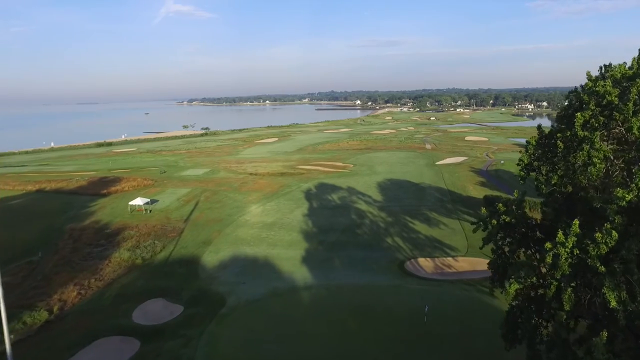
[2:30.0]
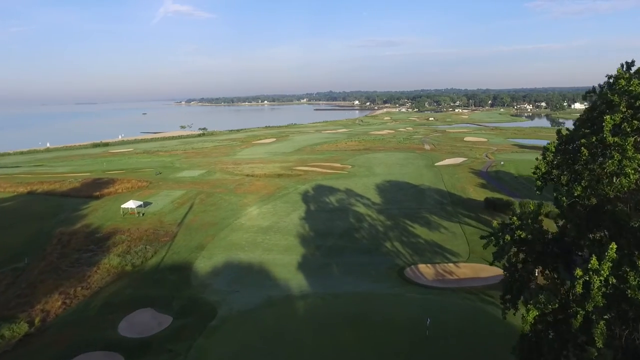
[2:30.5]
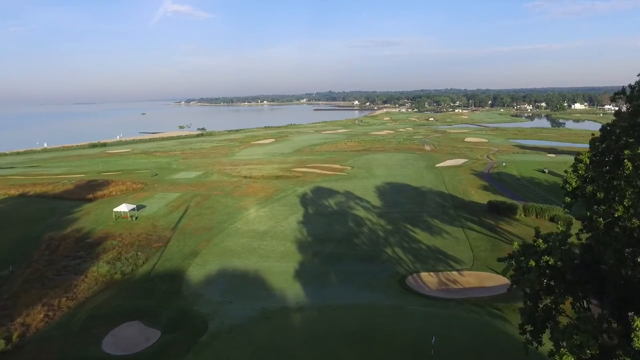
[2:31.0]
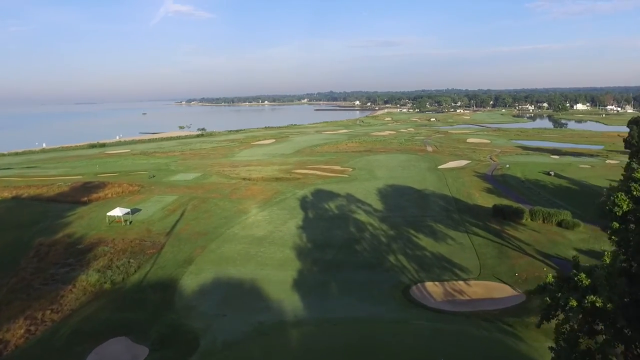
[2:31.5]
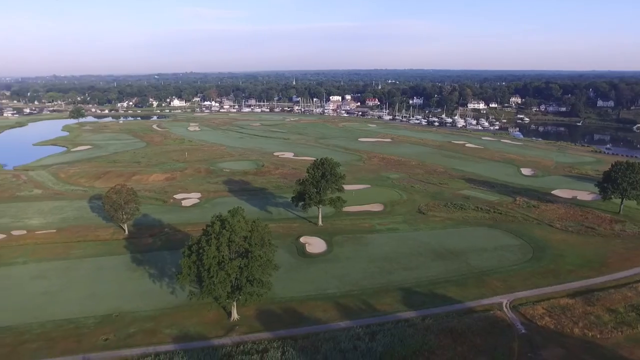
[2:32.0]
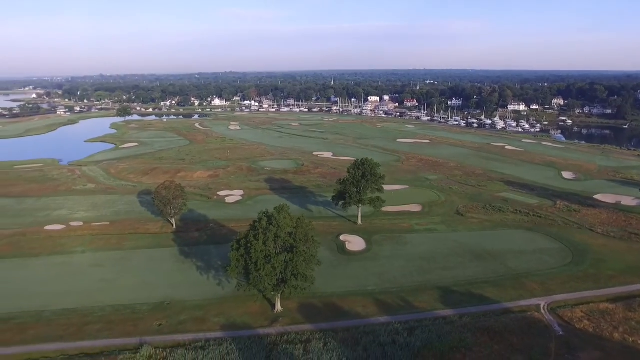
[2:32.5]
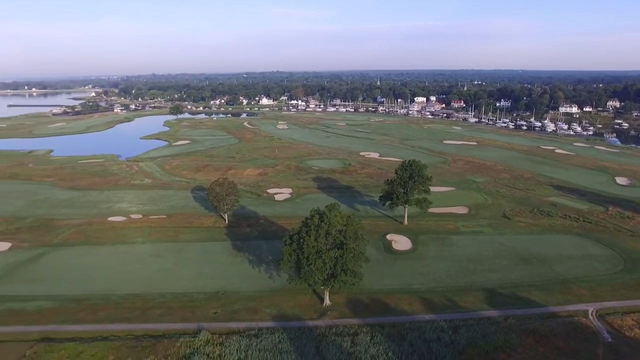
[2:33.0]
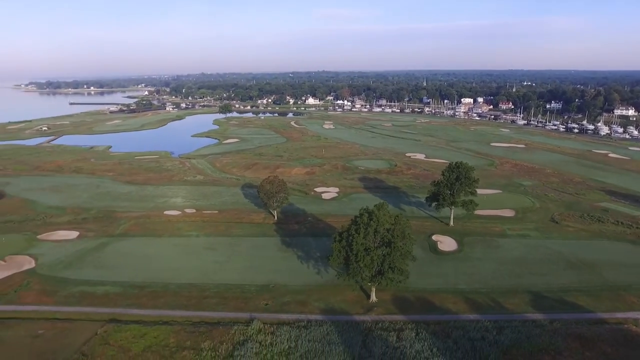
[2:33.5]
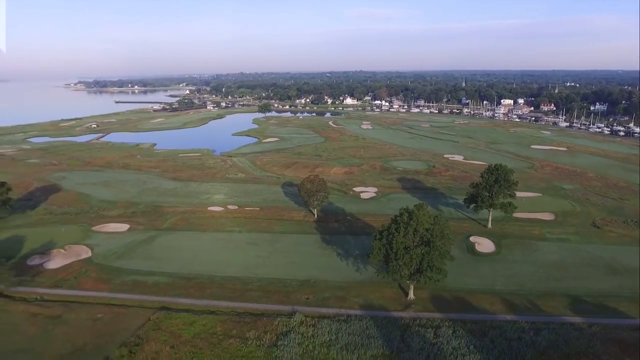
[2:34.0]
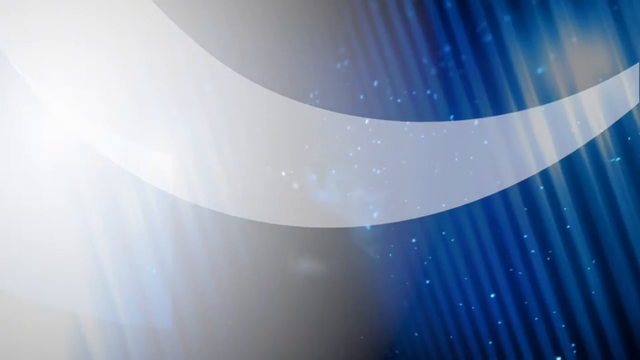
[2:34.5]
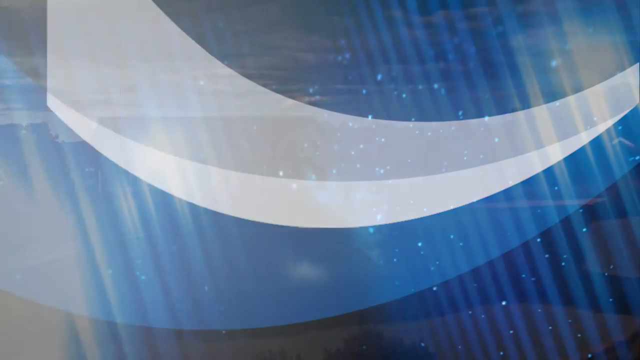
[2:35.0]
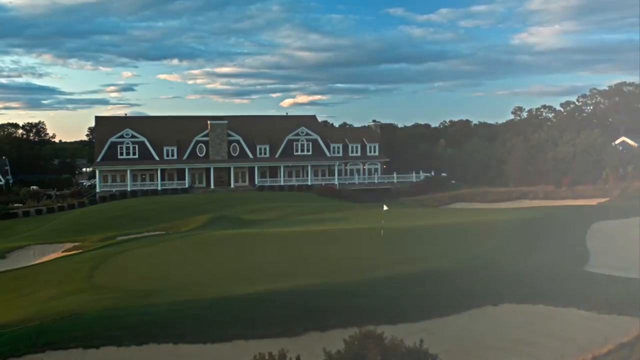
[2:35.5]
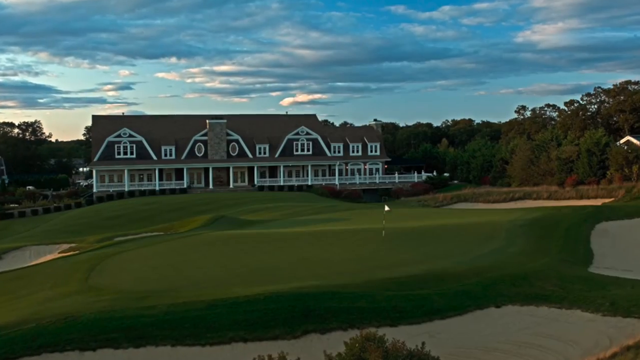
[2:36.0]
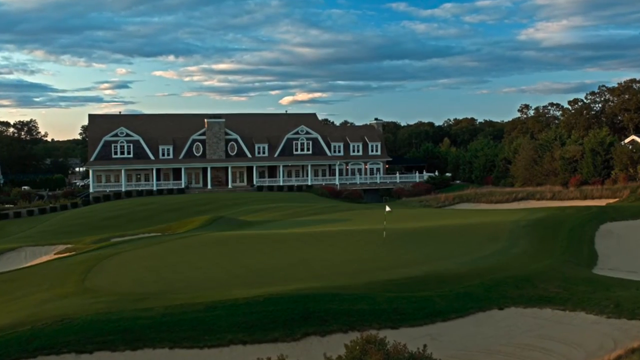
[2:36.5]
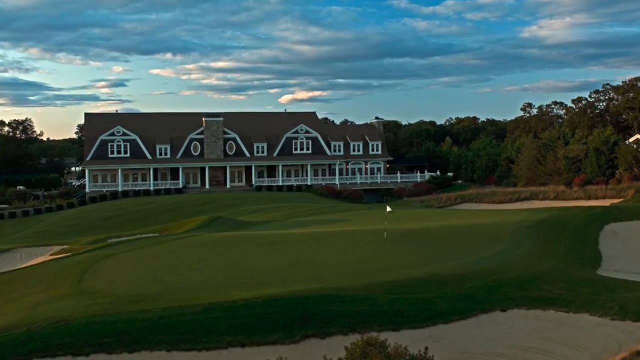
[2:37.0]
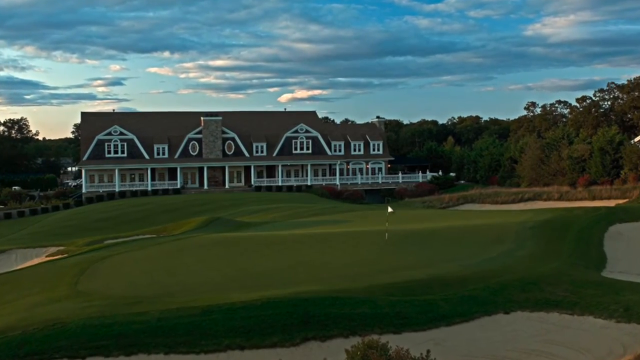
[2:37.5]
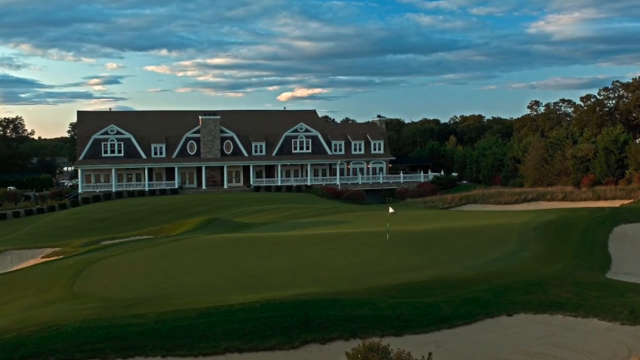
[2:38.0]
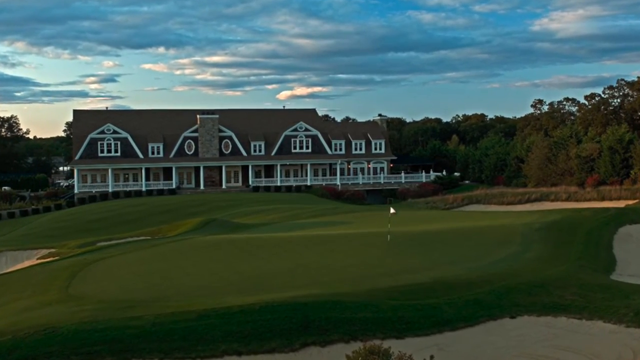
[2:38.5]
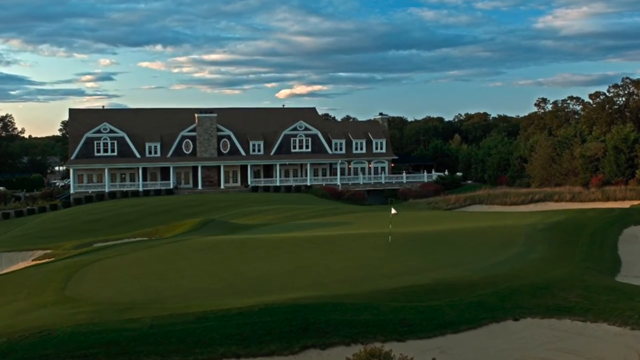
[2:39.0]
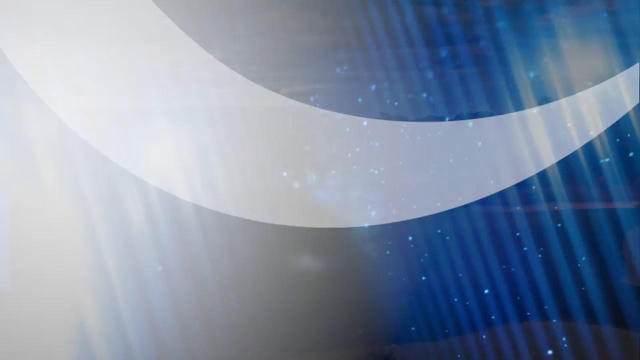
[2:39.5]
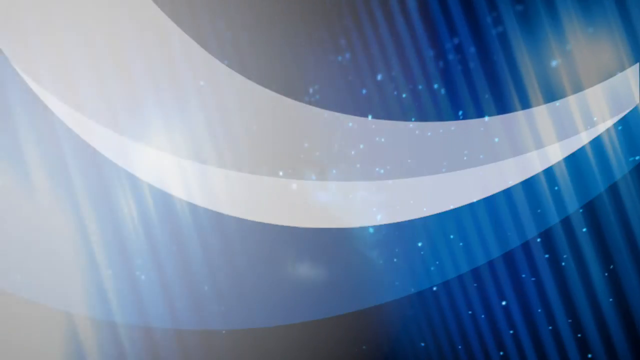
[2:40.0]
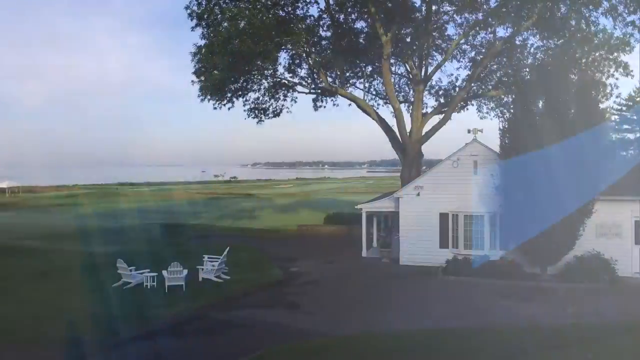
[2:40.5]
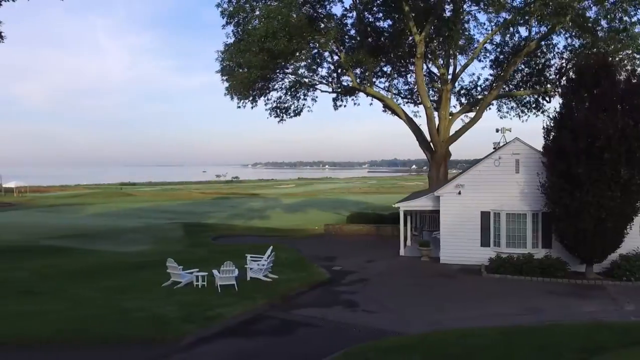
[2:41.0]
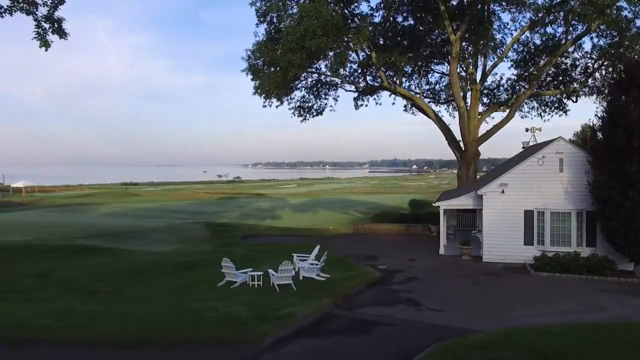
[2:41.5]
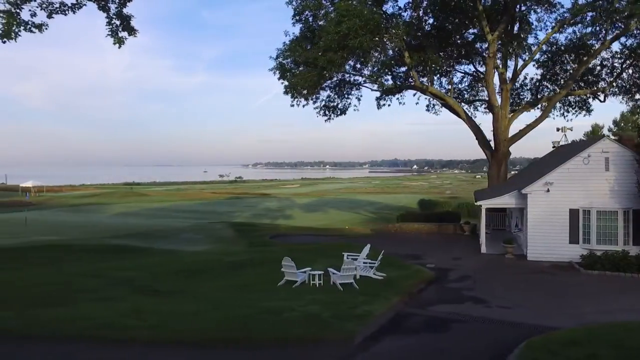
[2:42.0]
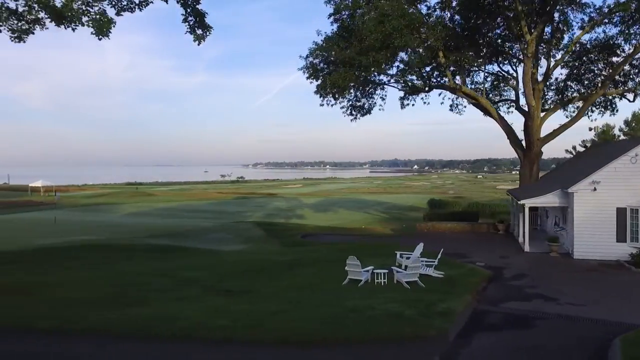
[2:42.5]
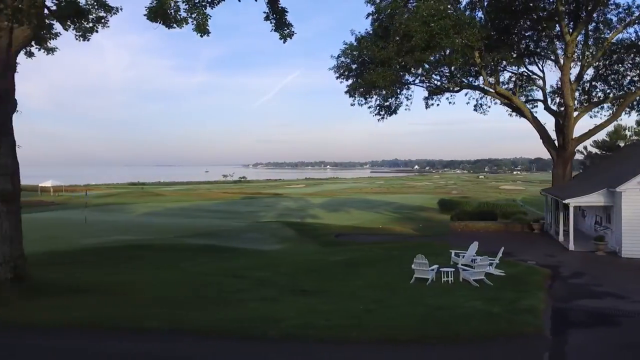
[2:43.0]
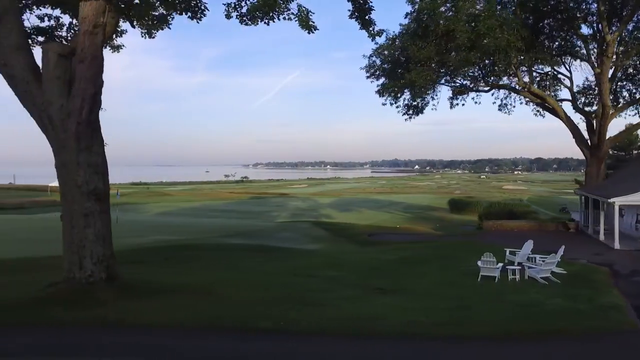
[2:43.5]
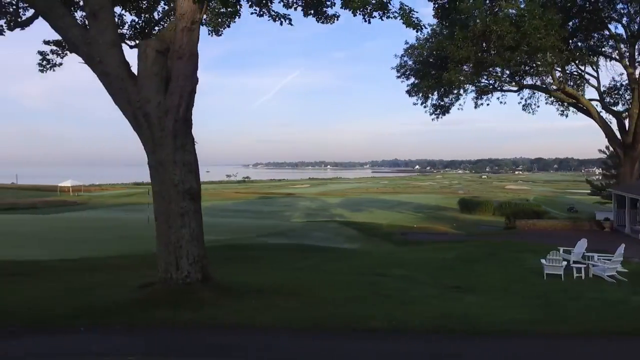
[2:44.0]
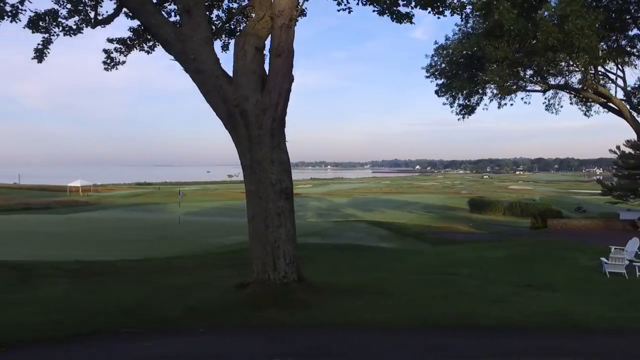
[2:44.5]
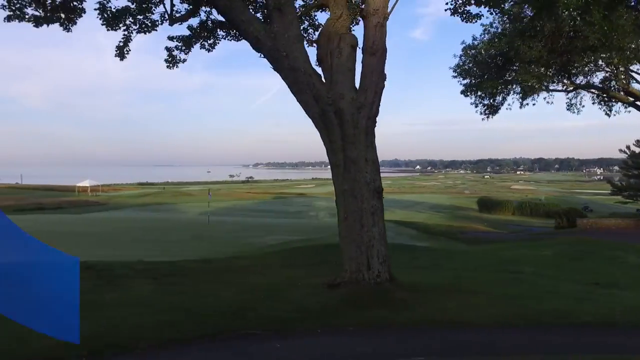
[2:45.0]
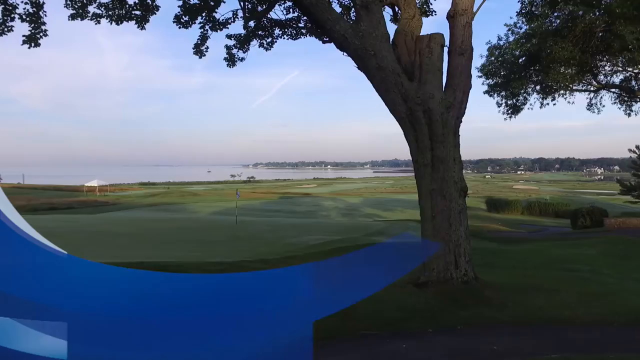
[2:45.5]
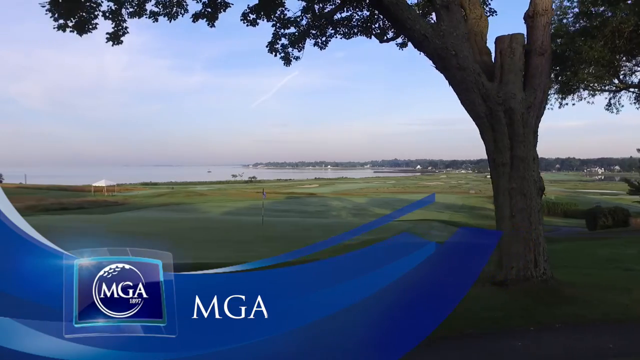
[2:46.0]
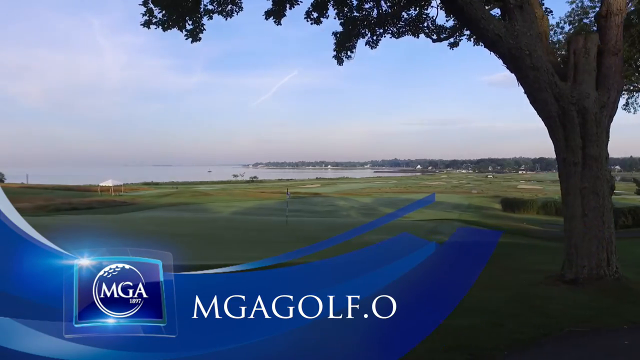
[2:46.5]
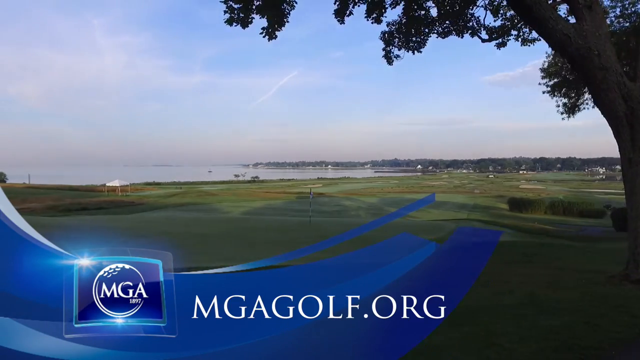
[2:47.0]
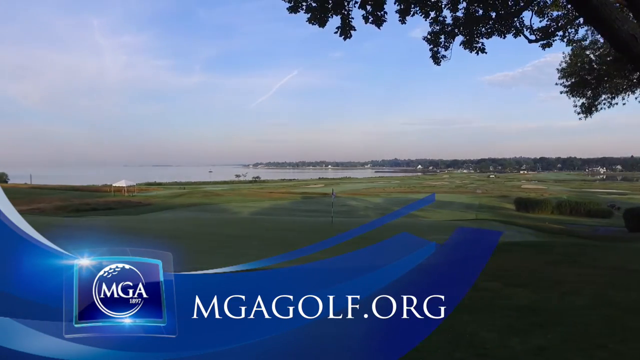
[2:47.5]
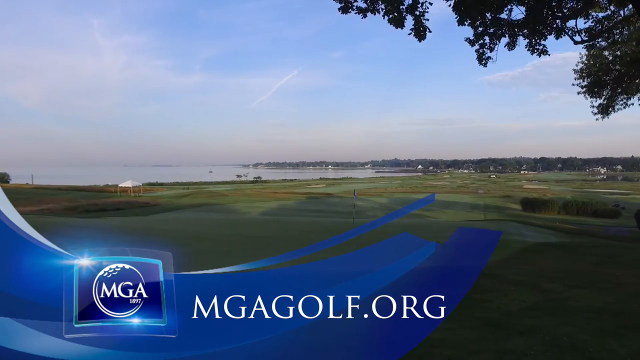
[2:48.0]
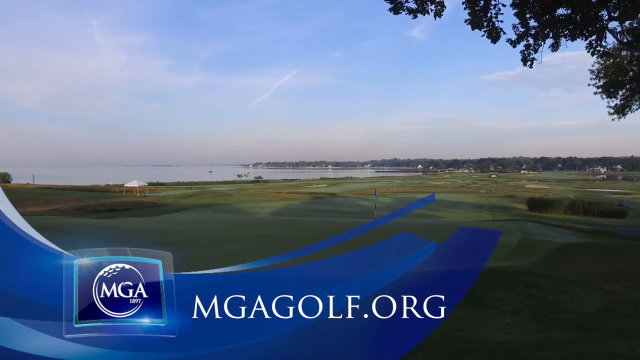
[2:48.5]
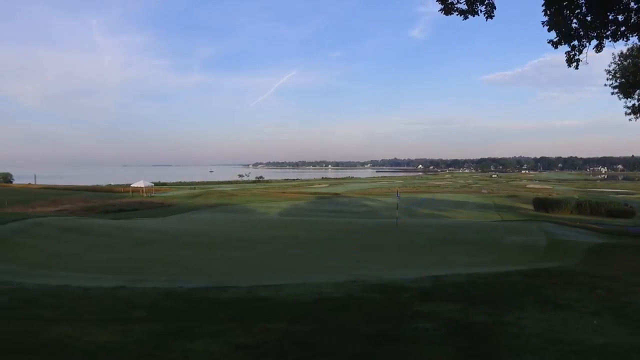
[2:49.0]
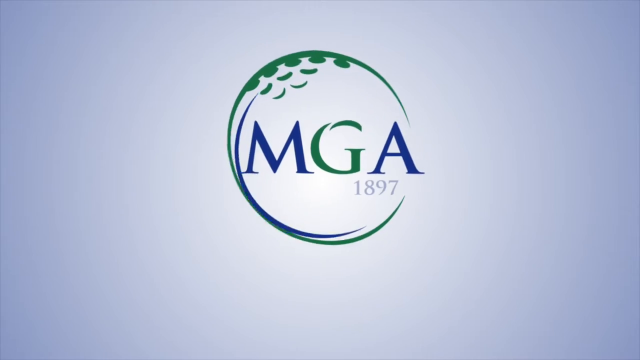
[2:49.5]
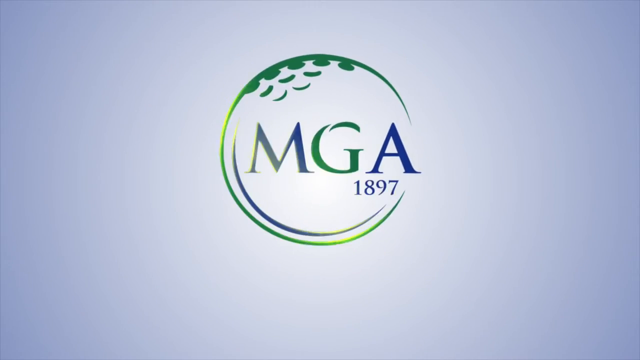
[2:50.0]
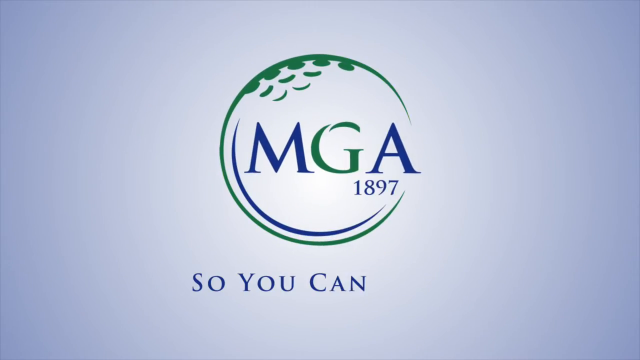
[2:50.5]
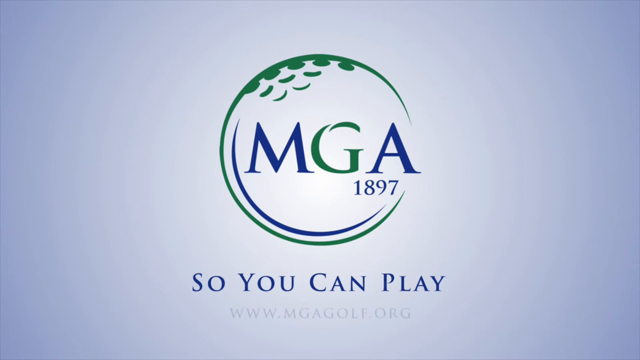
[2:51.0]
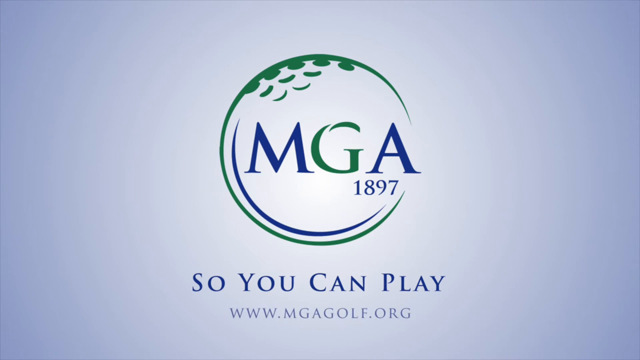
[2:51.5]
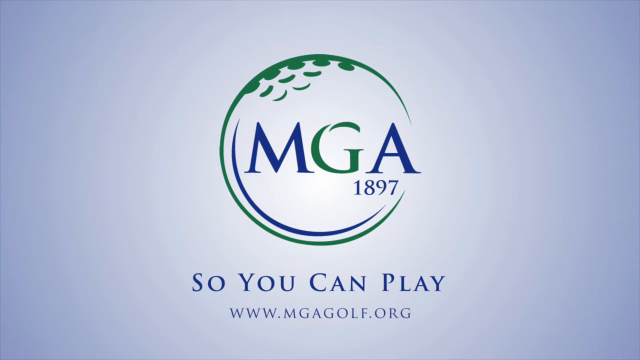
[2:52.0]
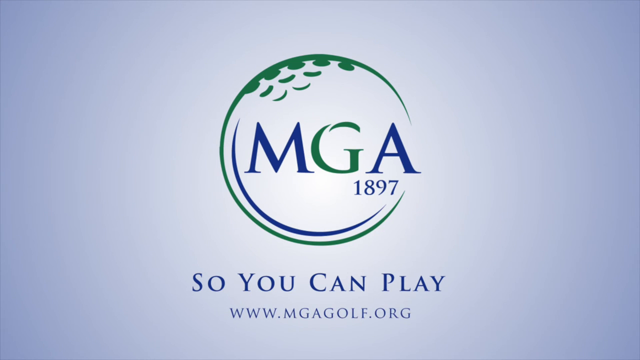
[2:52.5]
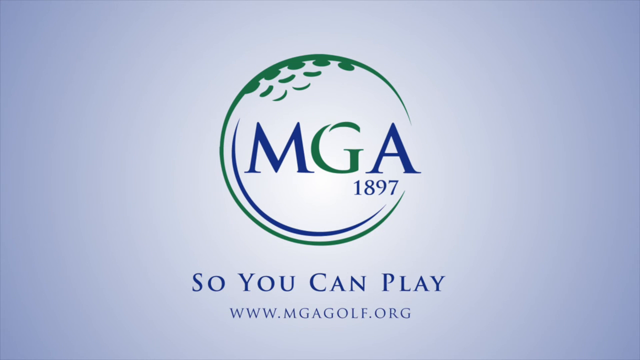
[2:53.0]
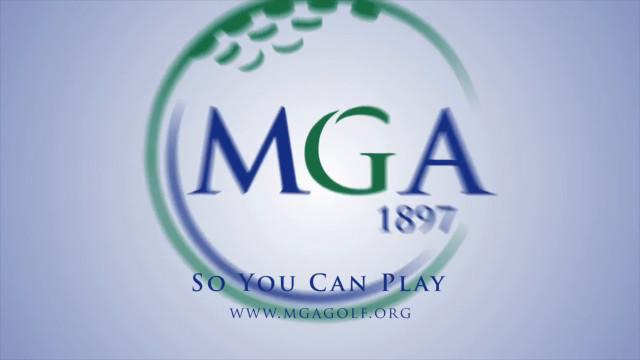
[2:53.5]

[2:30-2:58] Two more drone shots appear, followed by another blue graphic transition into an image of a clubhouse with white trim around the windows and a big roof, behind the golf course with a well-cut green and a hole with a flag in it. Bunkers filled with sand are around the outside of the screen. The sun appears to be either rising or setting, with a tree line to the right. The photo slowly zooms in, then another blue transition appears, followed by a horizontal panorama drone shot showing much more of the course. A logo reading "mgagolf.org" appears at the bottom of the screen, as it did at the beginning of the video. Then the same title screen as at the start appears, reading "mgagolf" and "So You Can Play", with the website "www.mgagolf.org" at the bottom.